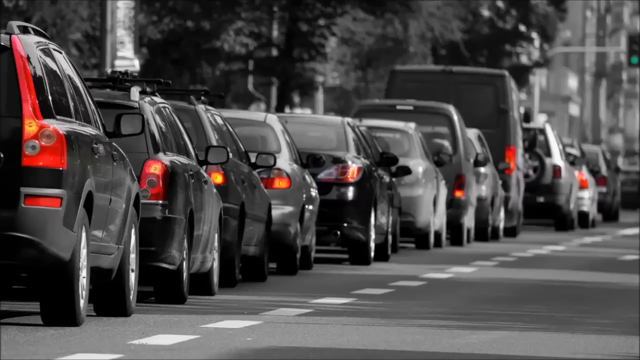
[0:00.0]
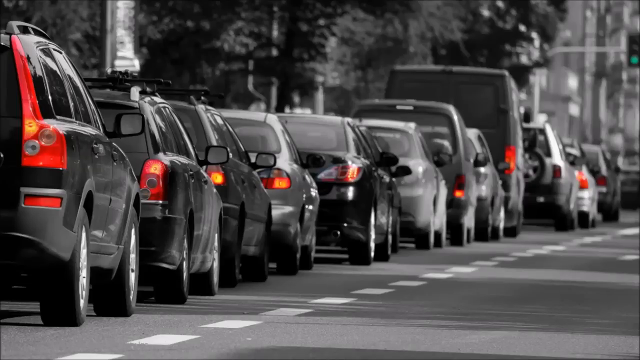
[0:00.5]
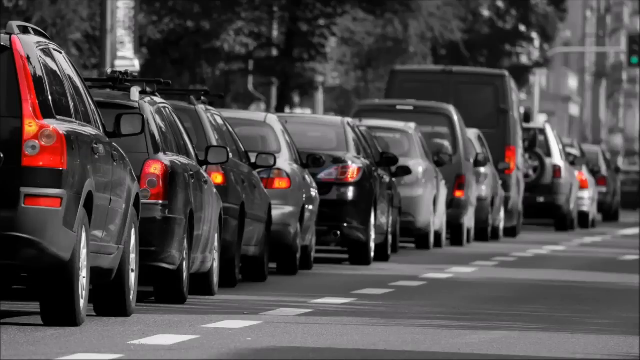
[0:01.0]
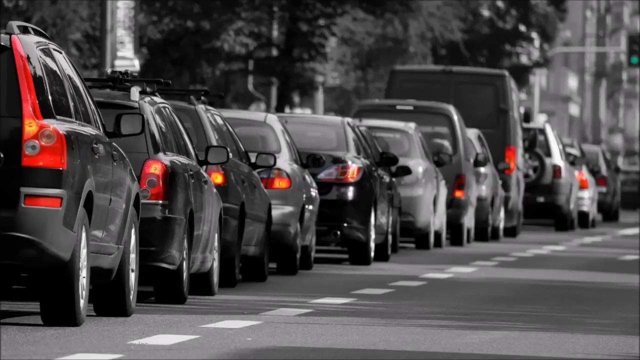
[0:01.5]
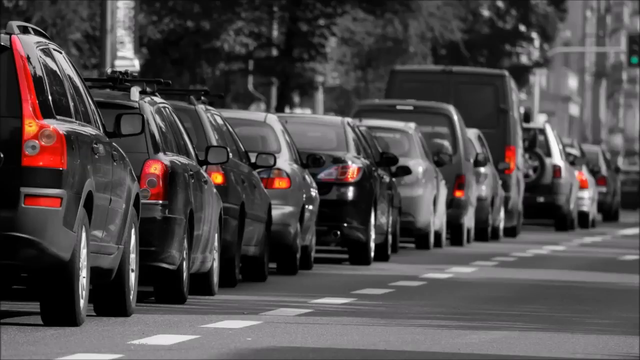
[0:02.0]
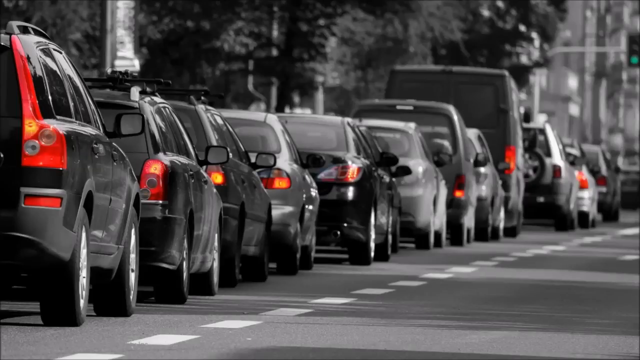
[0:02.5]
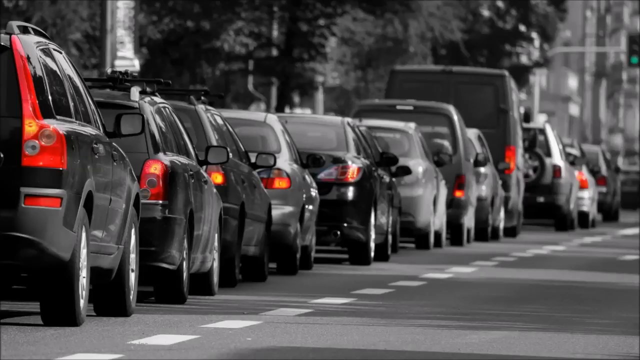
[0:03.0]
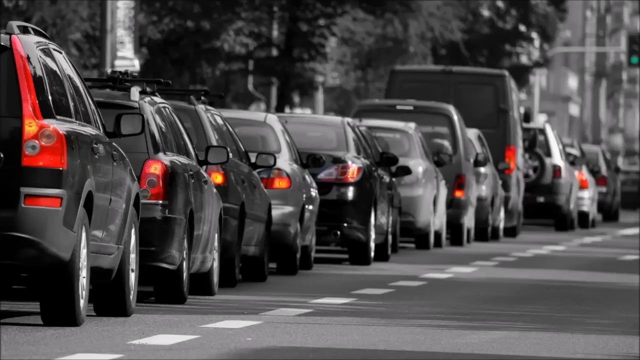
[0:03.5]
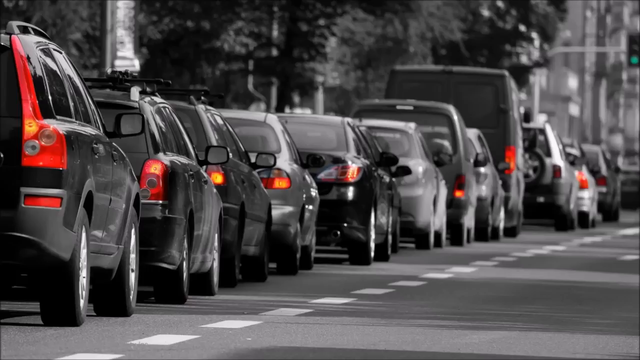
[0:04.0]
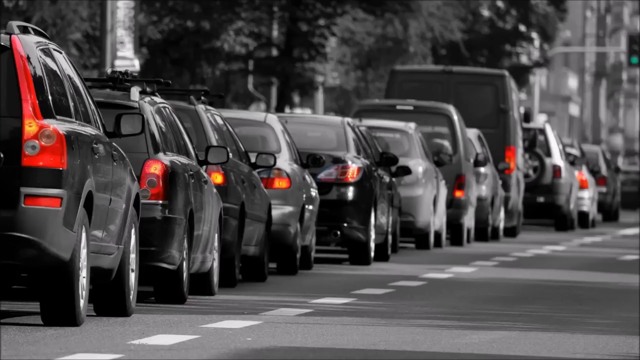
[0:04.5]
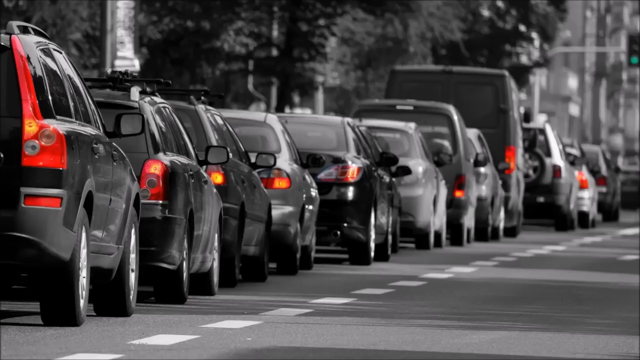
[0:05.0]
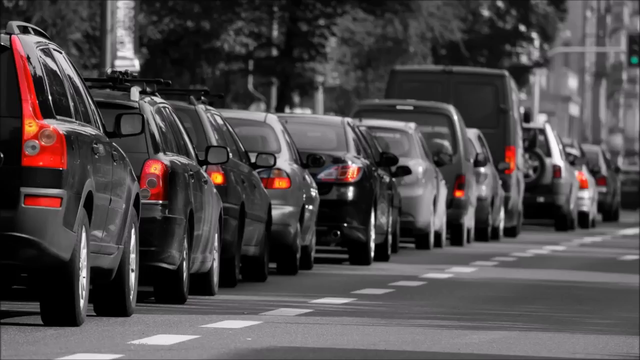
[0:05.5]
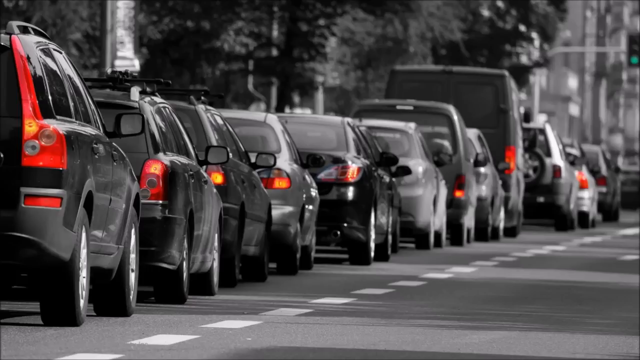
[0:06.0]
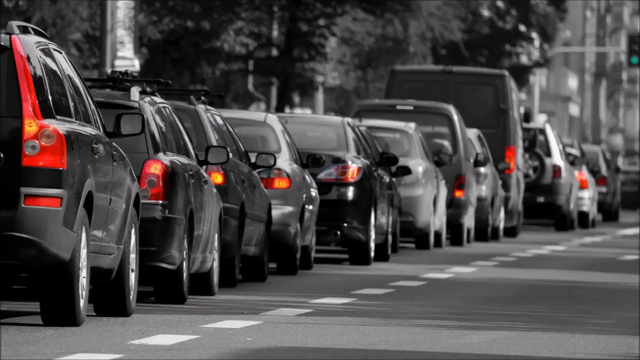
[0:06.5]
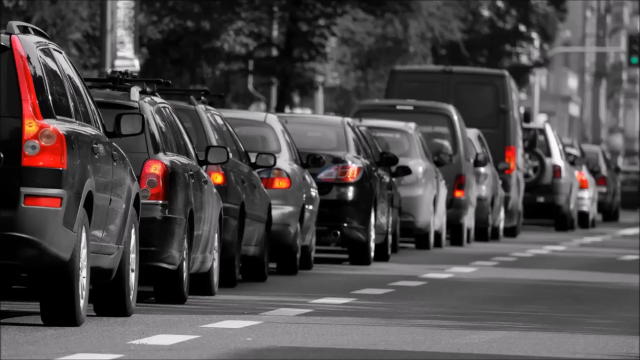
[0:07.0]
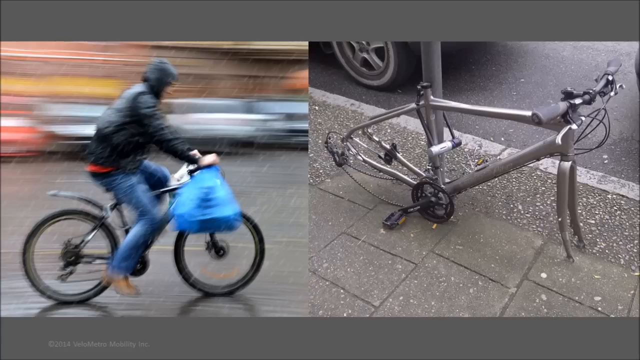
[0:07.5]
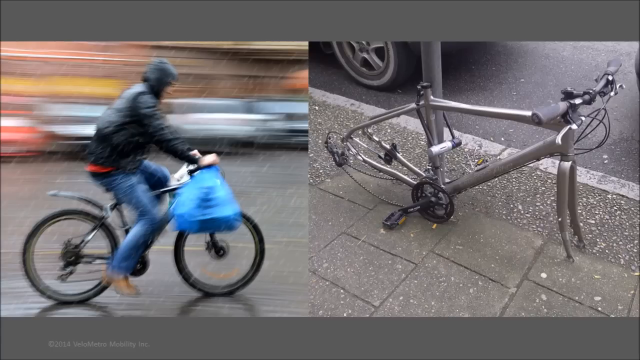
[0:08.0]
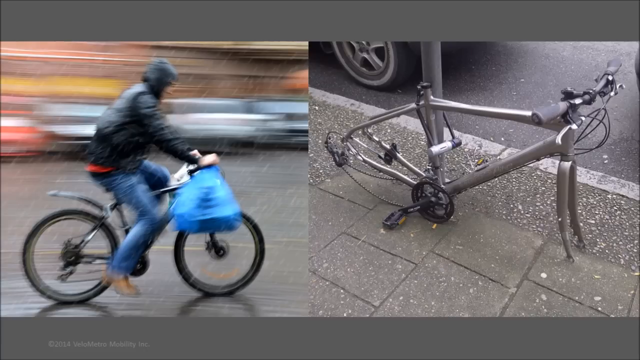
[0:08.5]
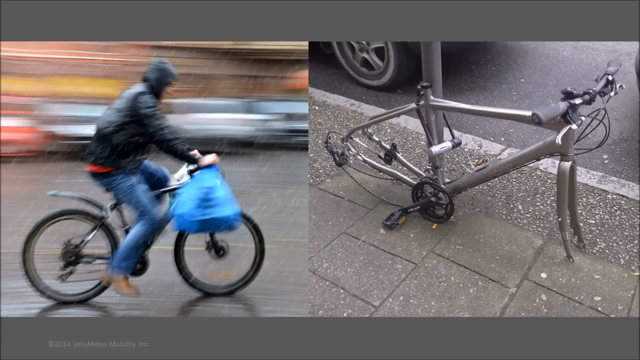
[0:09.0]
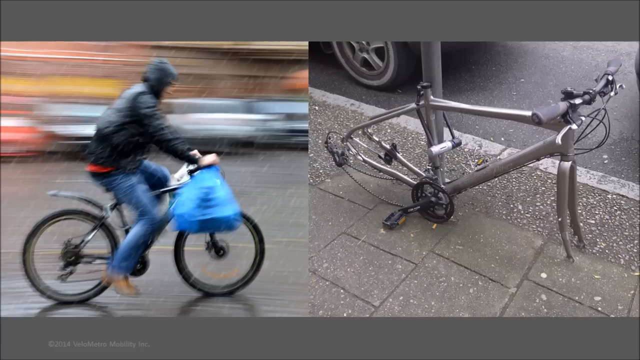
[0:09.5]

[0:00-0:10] A line of cars on a city street has its brake lights on, so the cars look like they might be in a traffic jam. A split screen follows. On one side a person rides a bike, holding a blue bag in their right hand, with their hood up, clearly going fast. The right side shows a bike chained to a pole on a city street, next to cars parked on the side of the road. It has no tires, the wheels are gone, the seat is gone, and only the guts of the bike are left; despite the chain, it has apparently been stripped of everything.